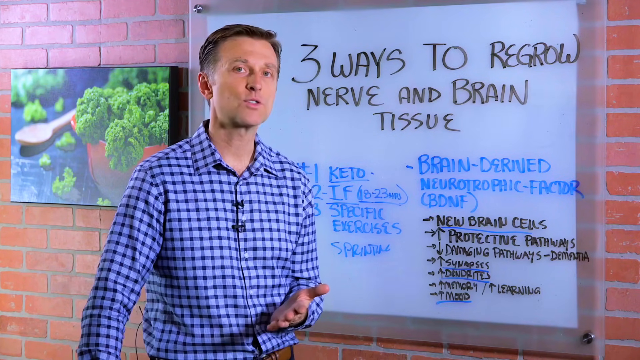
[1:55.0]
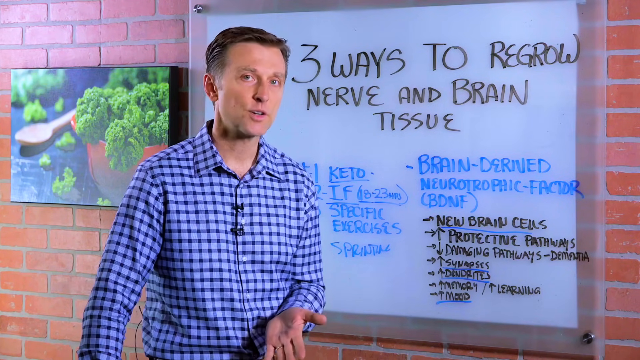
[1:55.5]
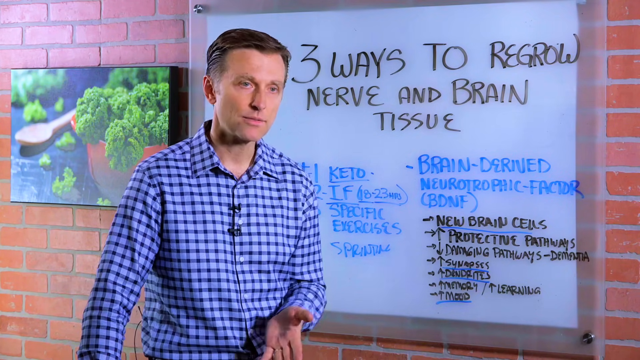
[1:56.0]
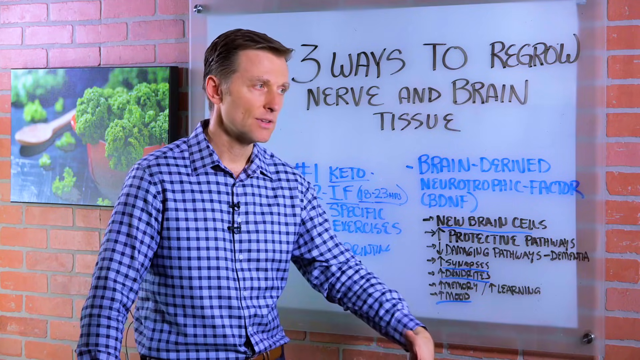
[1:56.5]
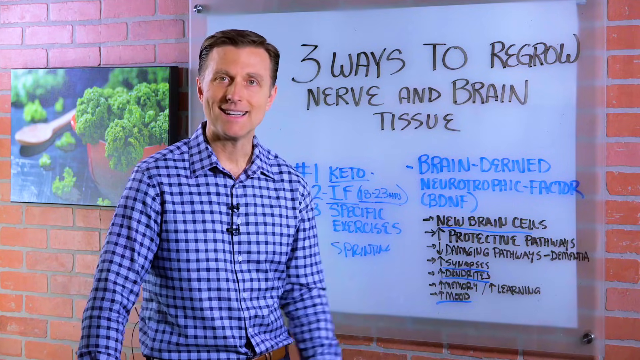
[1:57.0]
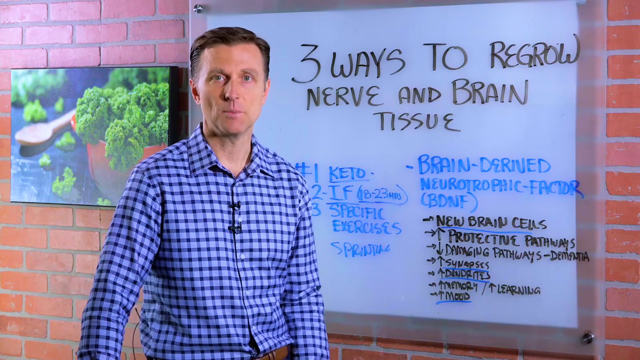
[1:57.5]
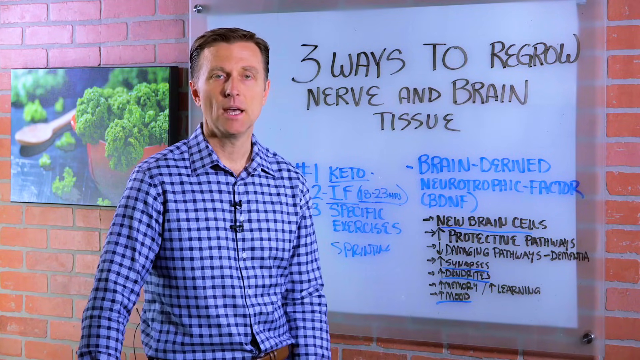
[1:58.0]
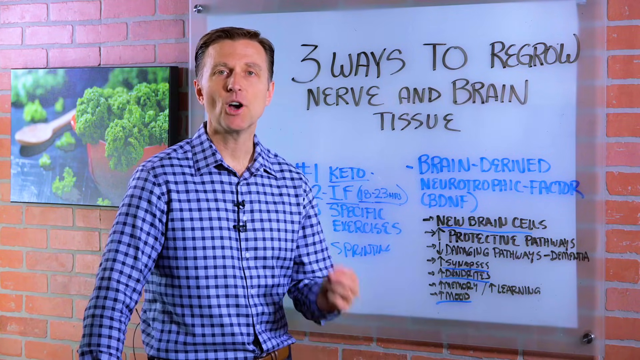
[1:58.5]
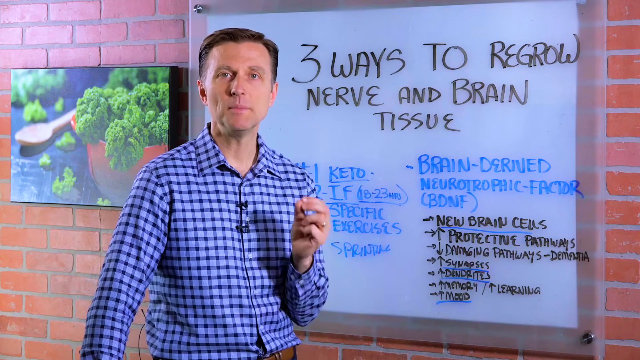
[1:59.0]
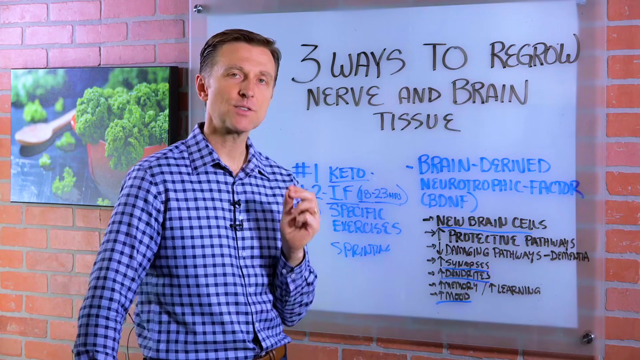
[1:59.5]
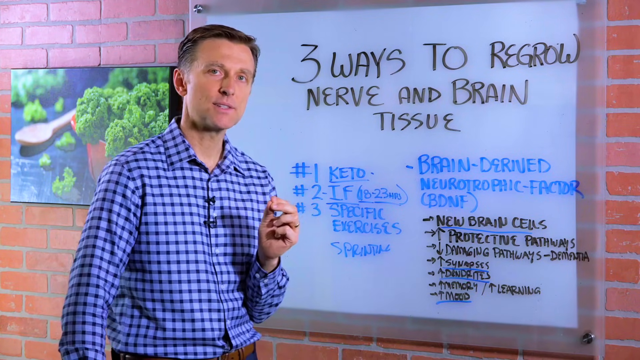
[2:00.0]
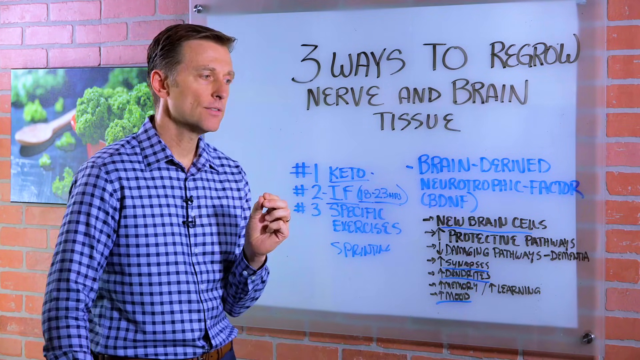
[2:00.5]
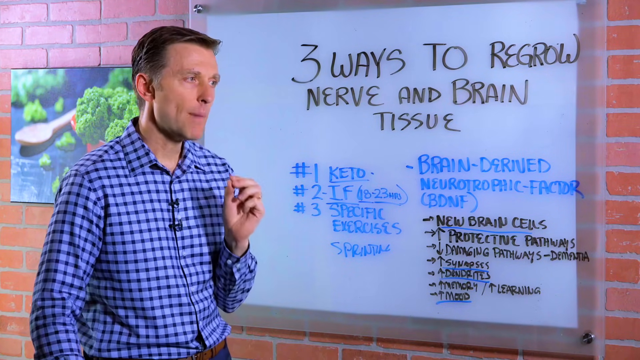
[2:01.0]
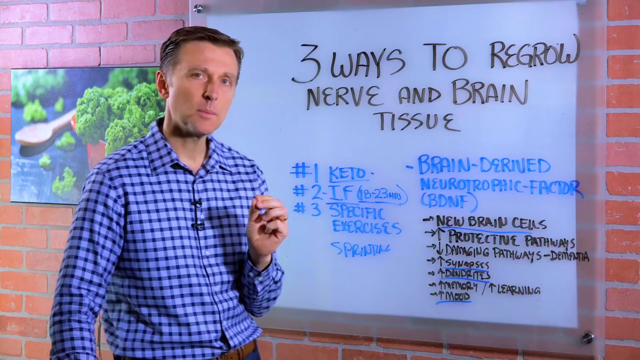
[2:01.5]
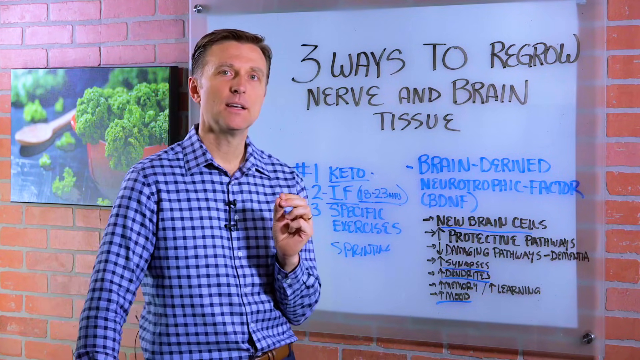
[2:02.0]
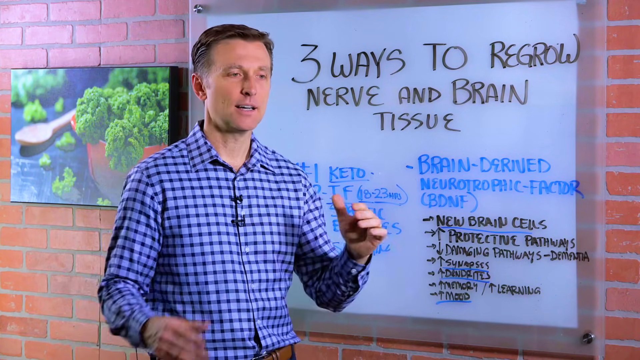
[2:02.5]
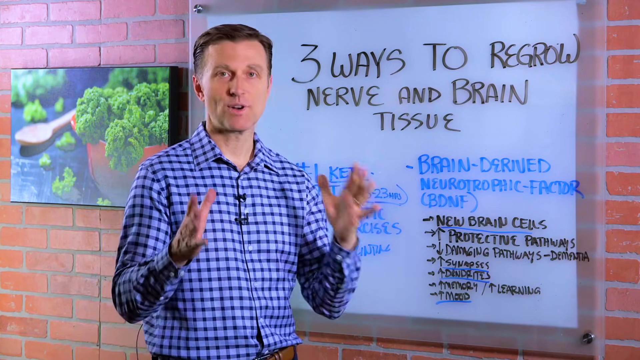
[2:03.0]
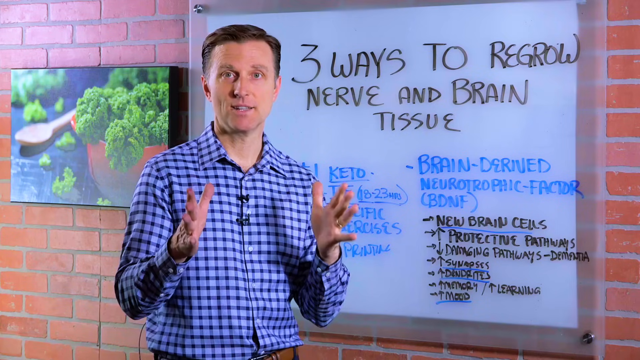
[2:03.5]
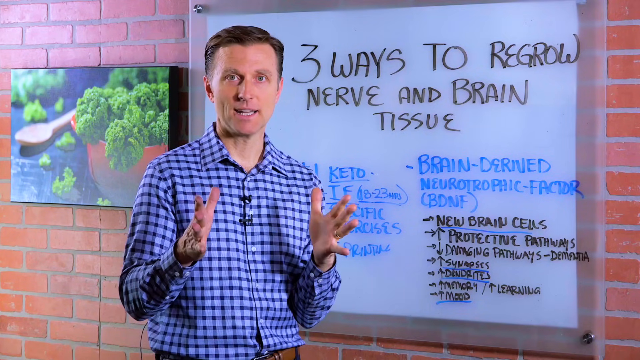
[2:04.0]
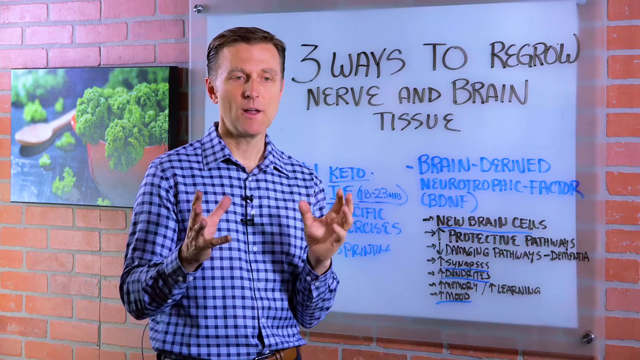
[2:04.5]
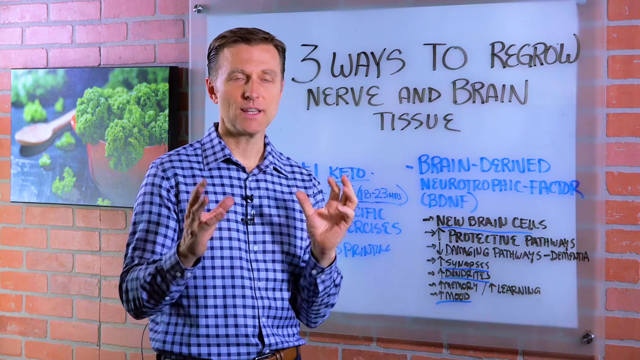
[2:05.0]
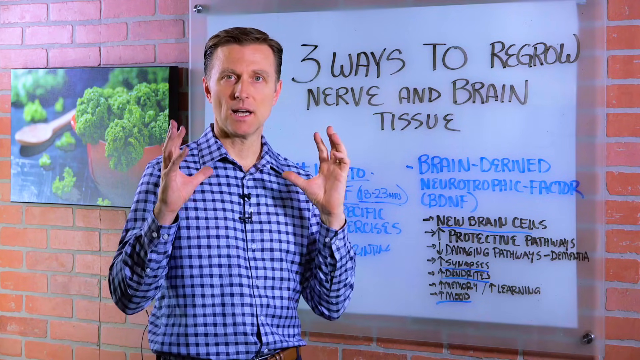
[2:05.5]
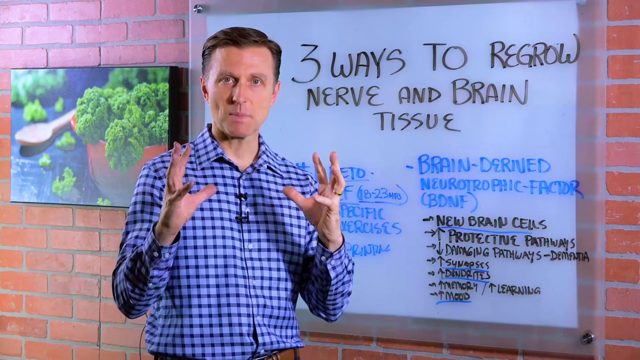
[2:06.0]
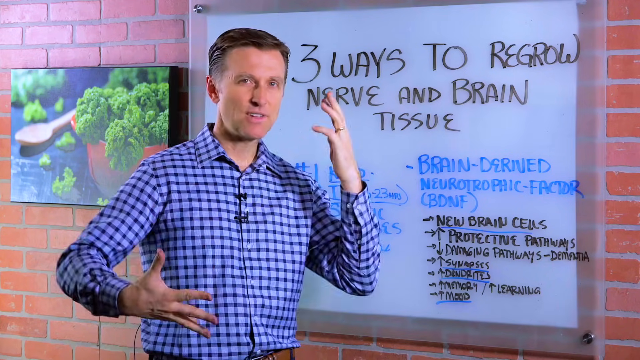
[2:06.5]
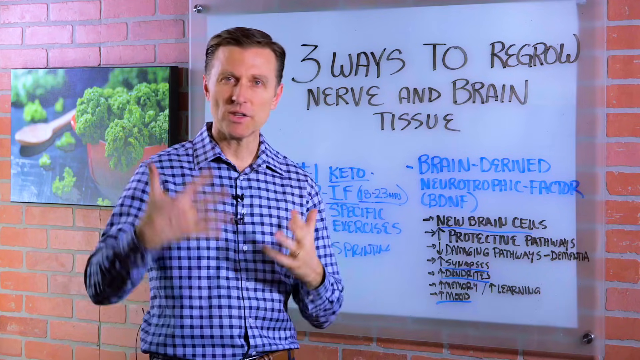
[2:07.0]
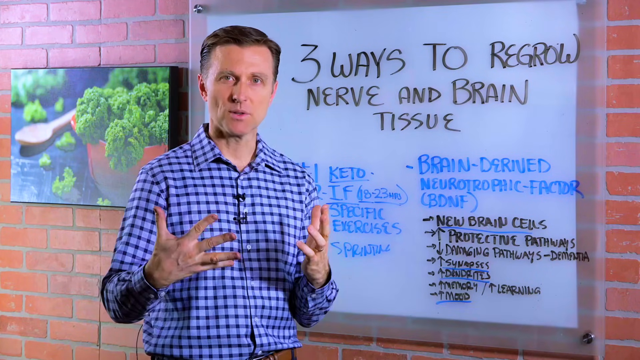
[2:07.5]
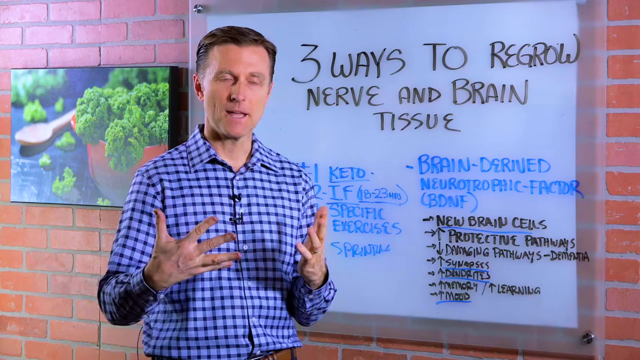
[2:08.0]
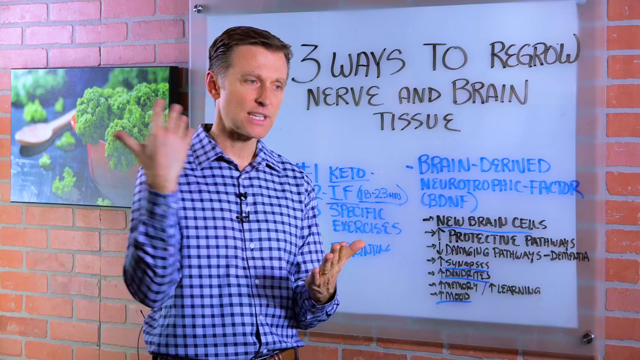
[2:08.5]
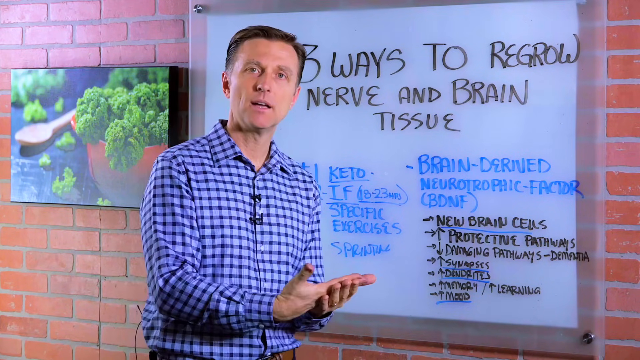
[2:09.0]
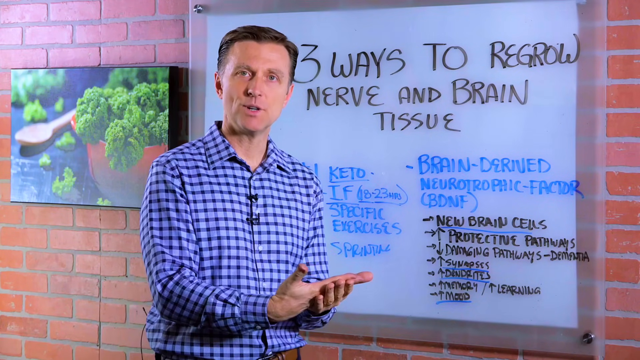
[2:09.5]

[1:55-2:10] A man in a purple plaid shirt and a brown belt talks to the camera, talking with his hands; he is clean shaven with his hair combed to the side. Behind him a white board reads "three ways to regrow nerve and brain tissue." Below the title on the left there seems to be a numbered list from one to three, and on the right there seems to be more of a bullet list, probably of topics. He seems very engaged in what he is saying. The white board is attached to a brick wall, and to its left is a picture on the wall showing a red bowl with a green vegetable on top. The bowl seems to rest on a black surface, possibly a table, and there is also a brown wooden spoon in the picture. He keeps talking to the camera, looking down once in a while.